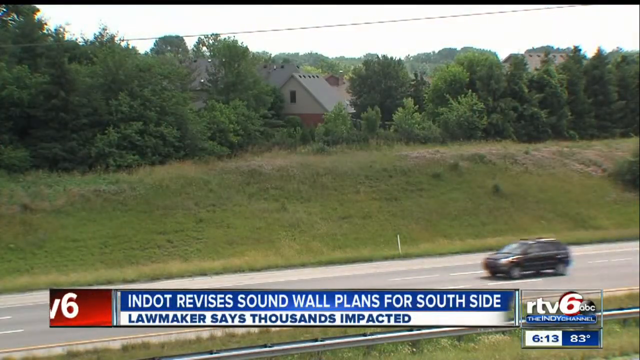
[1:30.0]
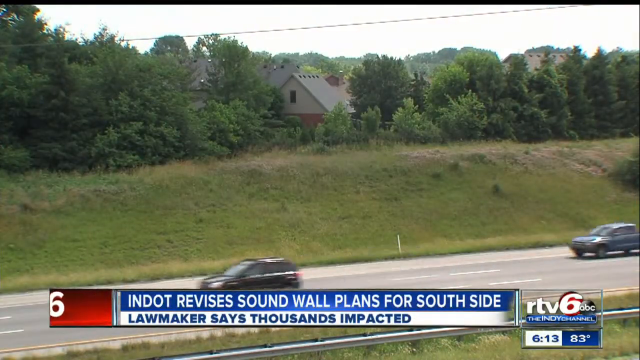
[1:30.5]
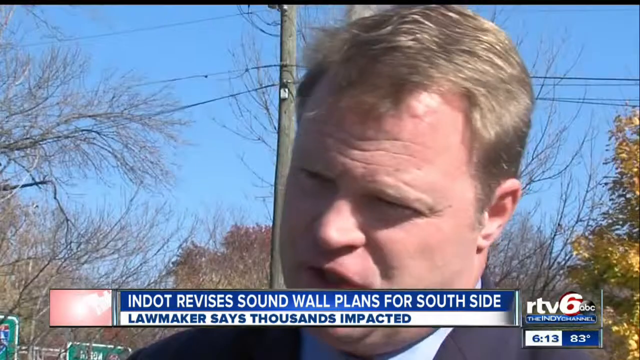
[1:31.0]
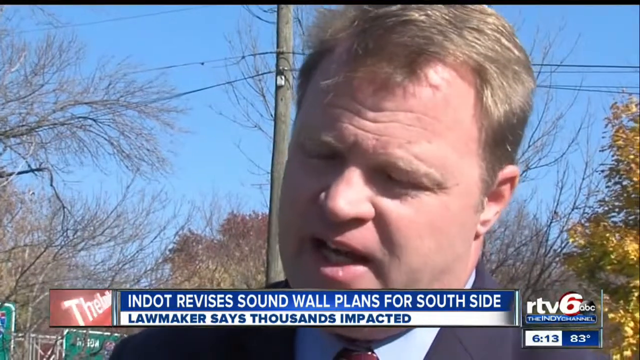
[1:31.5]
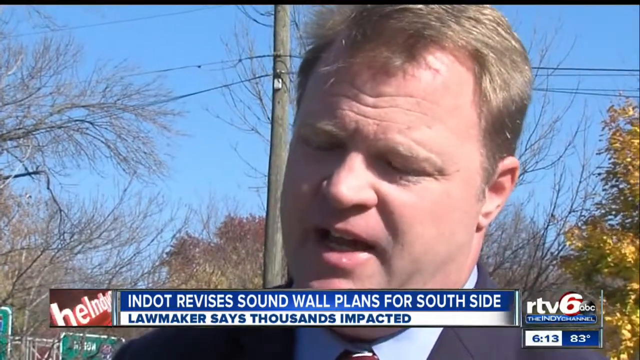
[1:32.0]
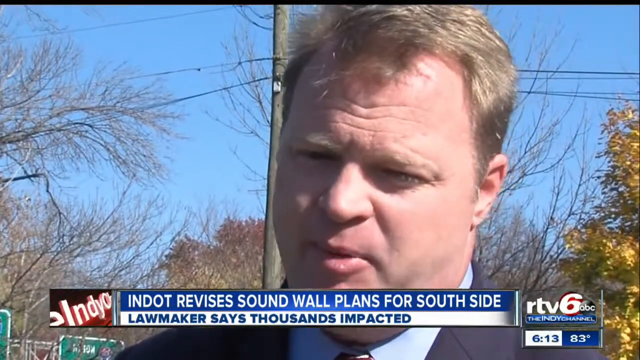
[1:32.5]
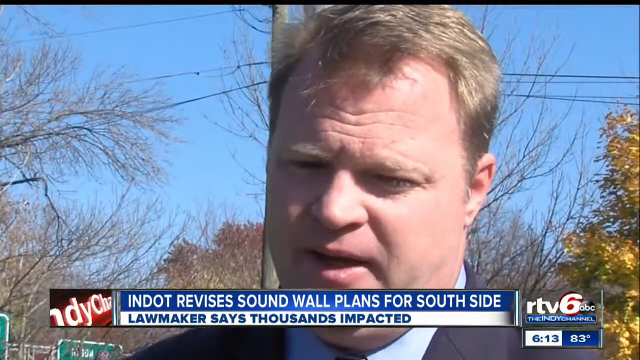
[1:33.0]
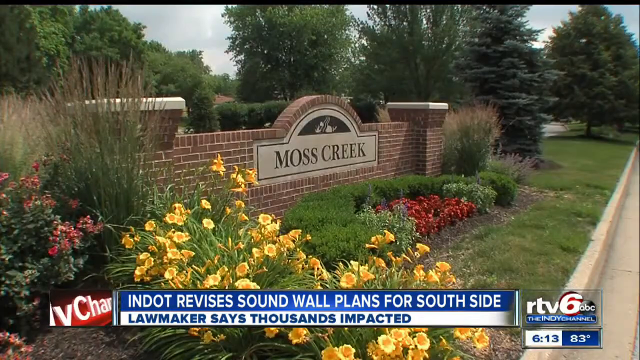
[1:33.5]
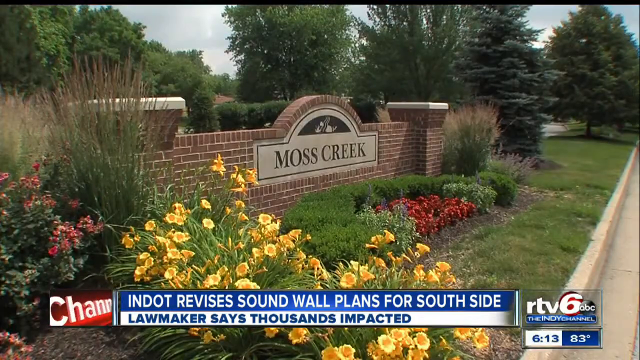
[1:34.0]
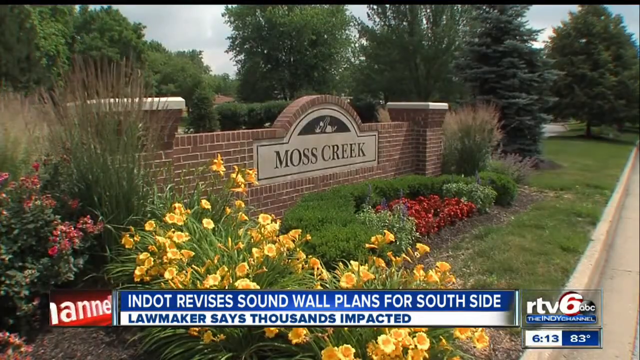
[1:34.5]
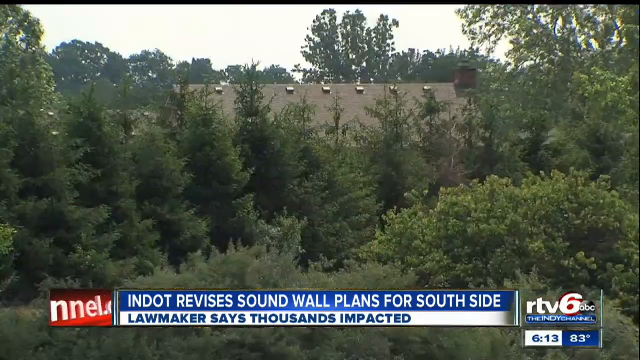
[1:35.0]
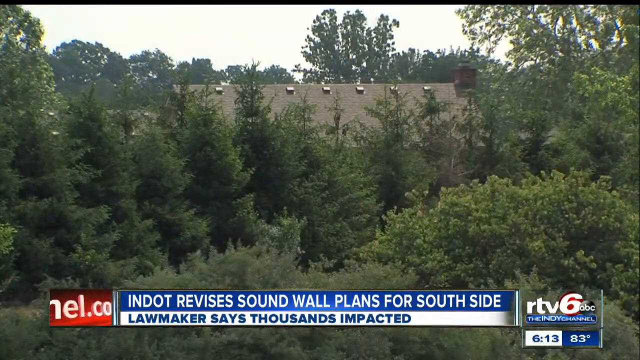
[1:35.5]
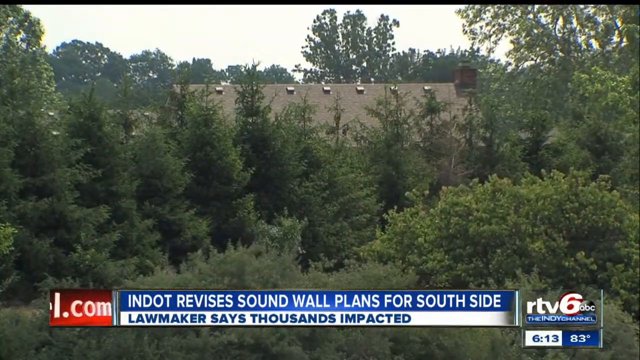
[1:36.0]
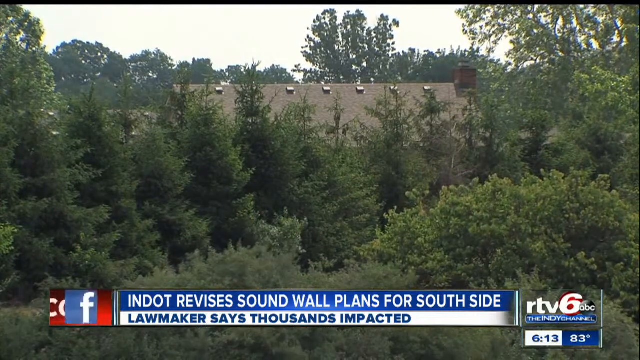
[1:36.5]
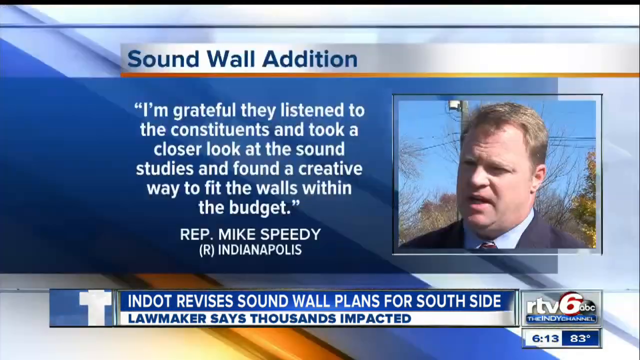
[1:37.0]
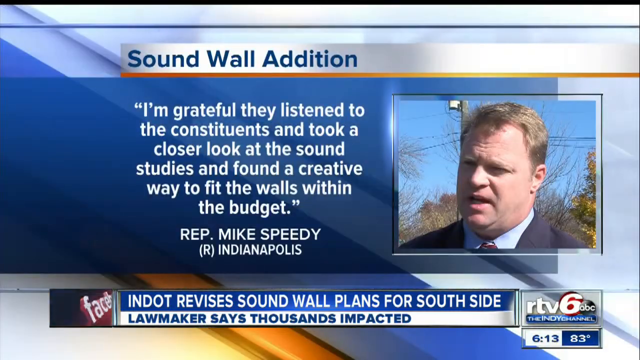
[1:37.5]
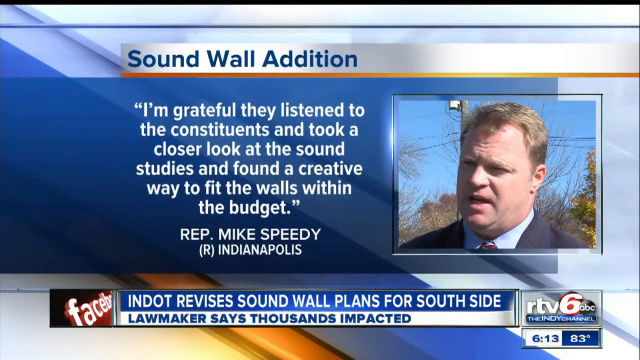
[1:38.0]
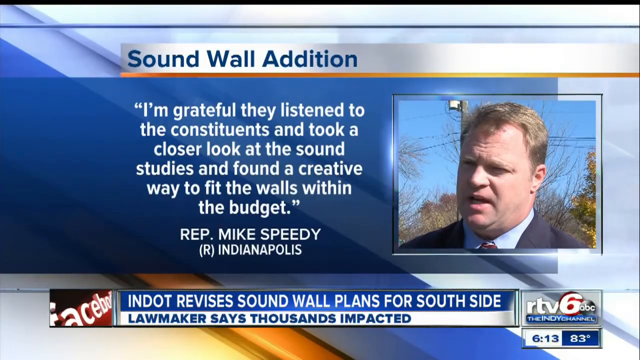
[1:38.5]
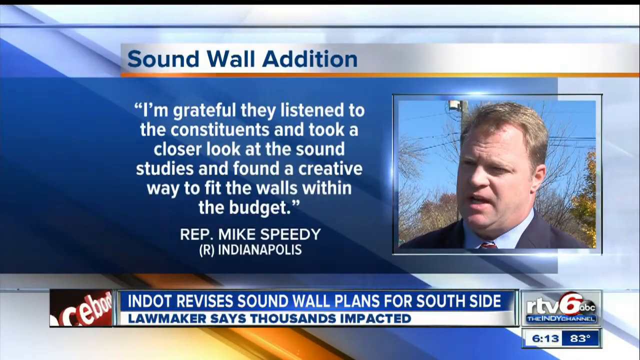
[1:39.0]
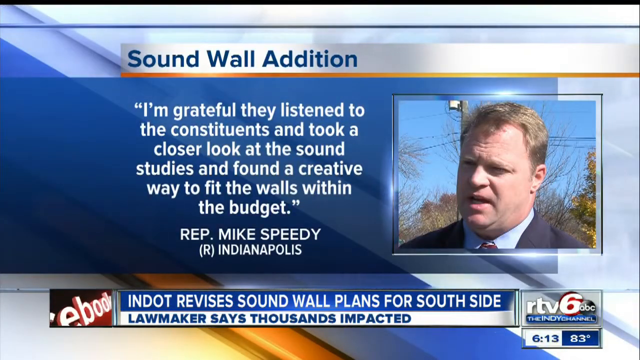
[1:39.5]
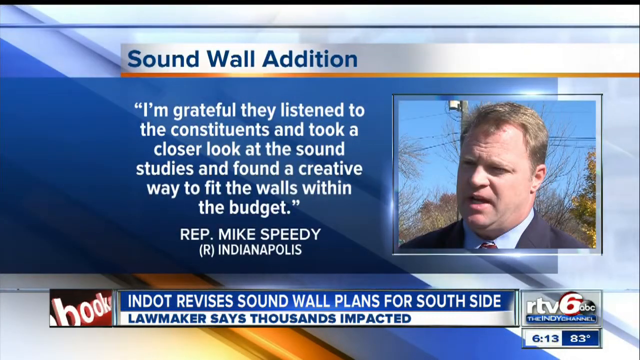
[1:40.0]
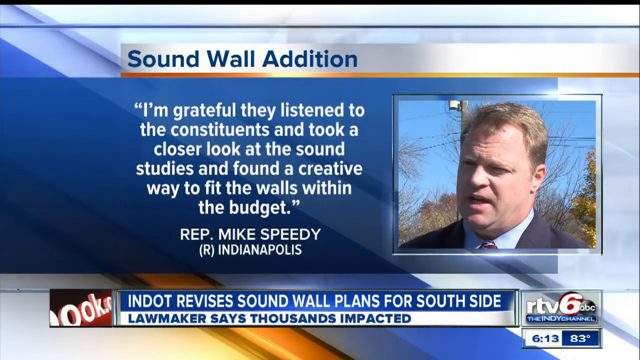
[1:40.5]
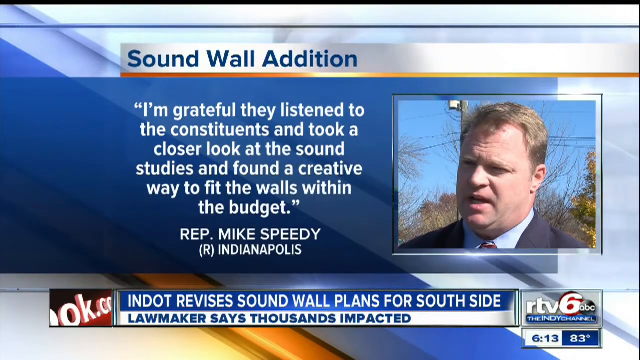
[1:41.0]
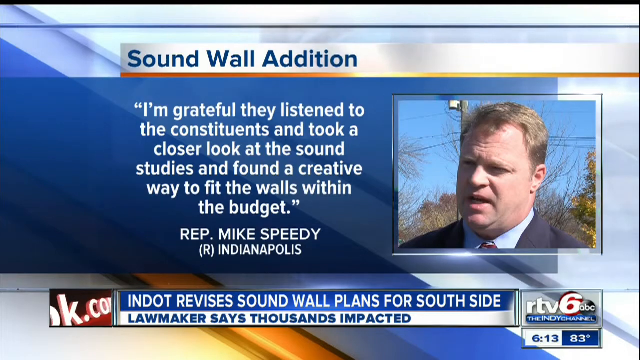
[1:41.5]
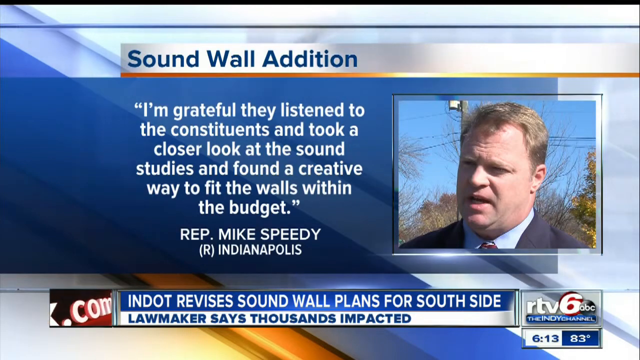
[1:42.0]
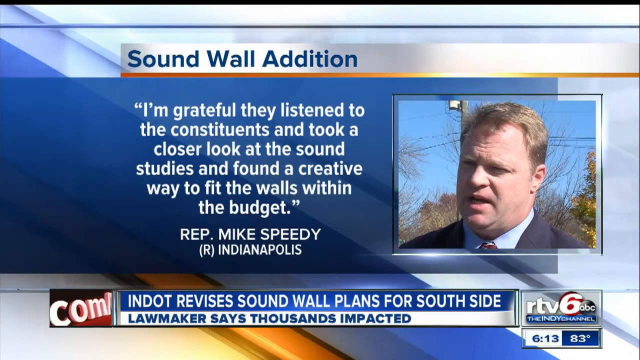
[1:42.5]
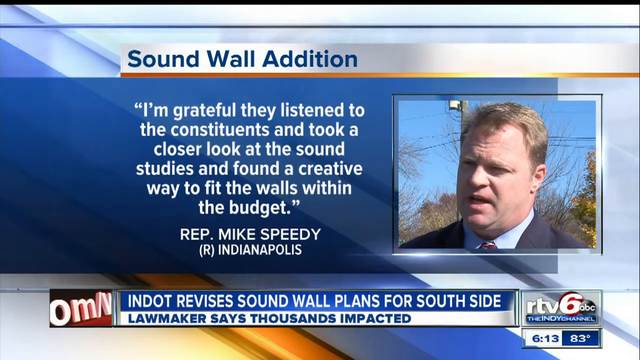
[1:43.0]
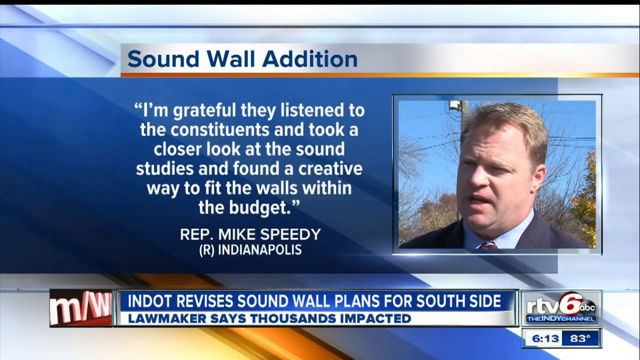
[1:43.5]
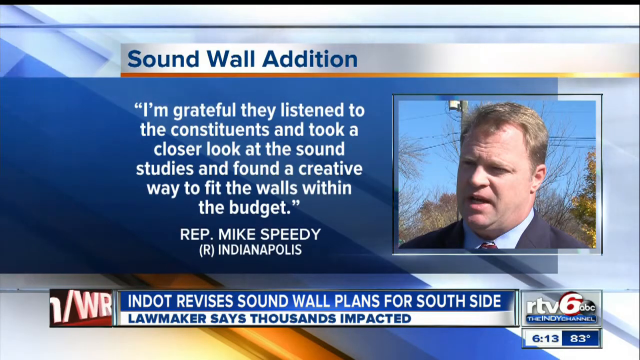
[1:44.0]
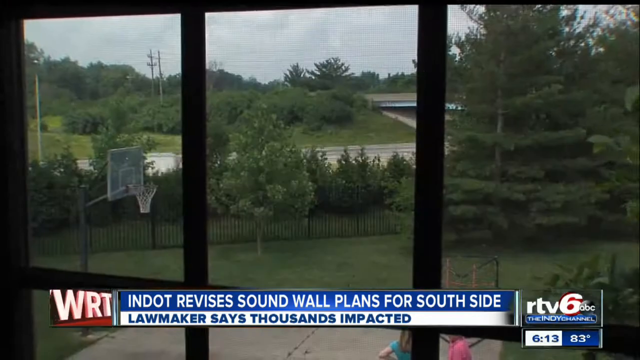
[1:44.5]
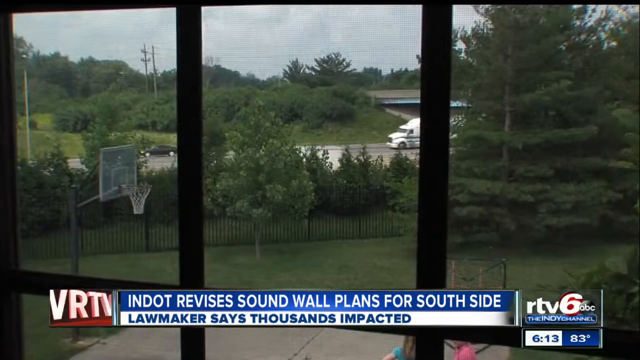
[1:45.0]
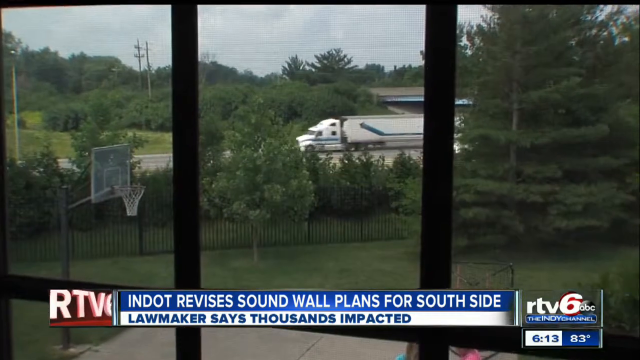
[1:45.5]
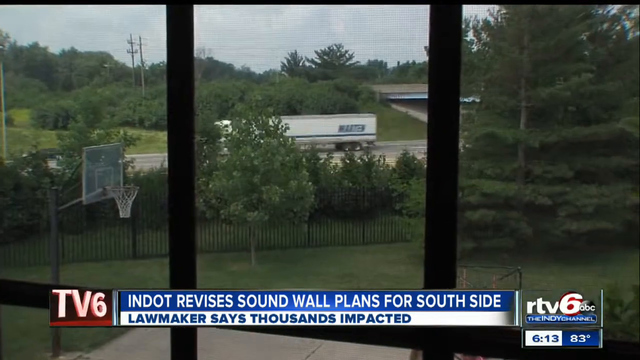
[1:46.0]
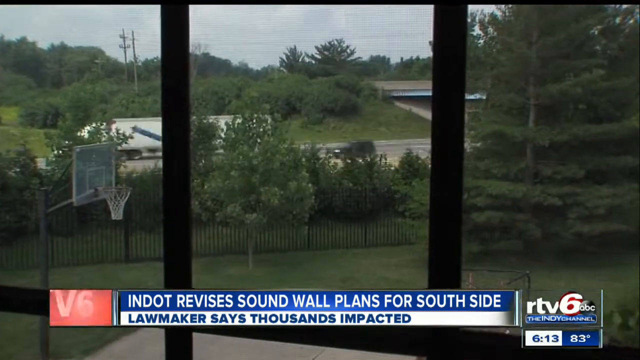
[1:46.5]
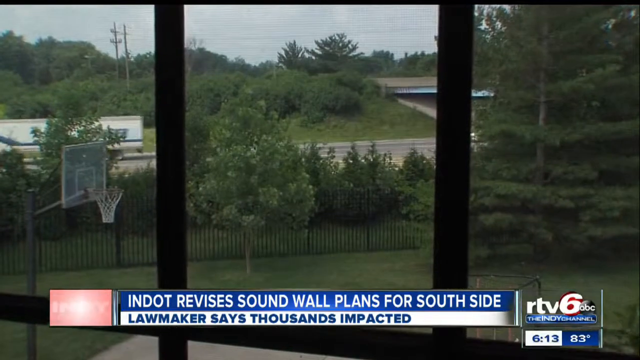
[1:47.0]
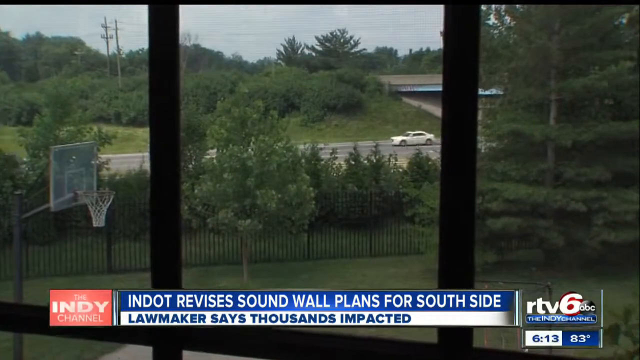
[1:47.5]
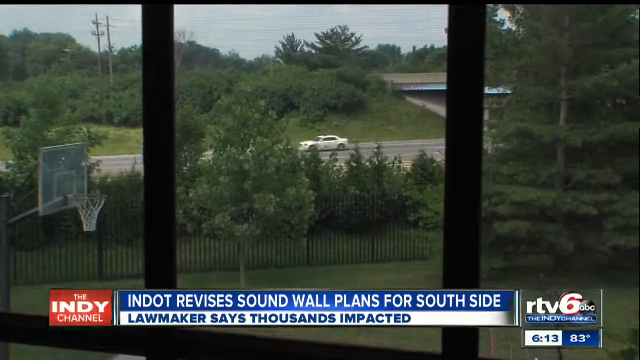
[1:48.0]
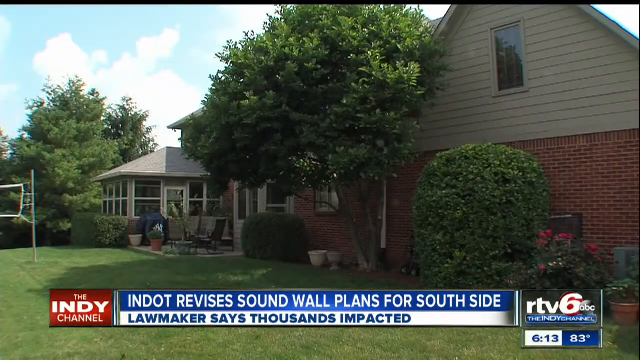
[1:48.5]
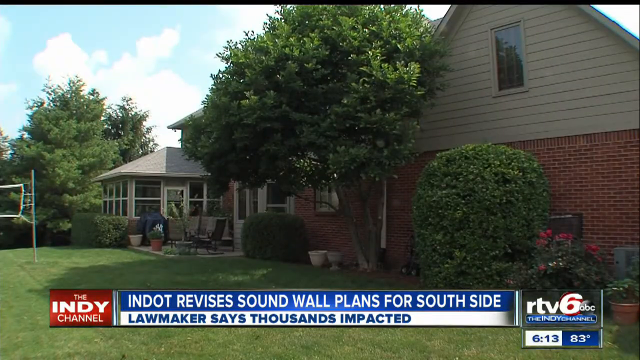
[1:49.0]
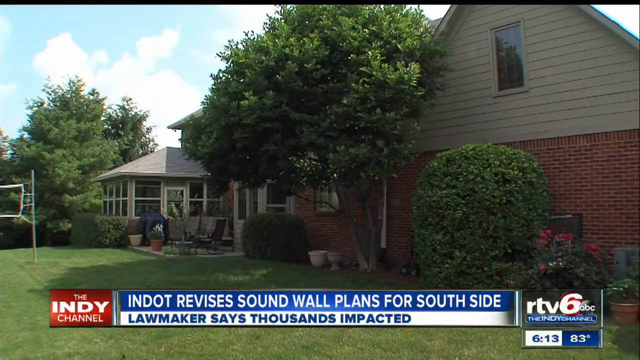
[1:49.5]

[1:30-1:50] The people of Moss Creek are expected to be able to open their windows and sit in their backyards and on their front porches without hearing the traffic.